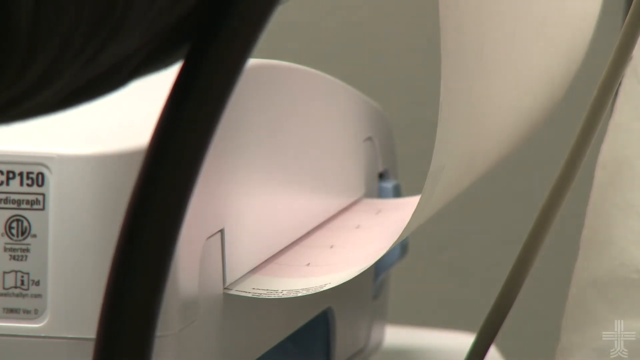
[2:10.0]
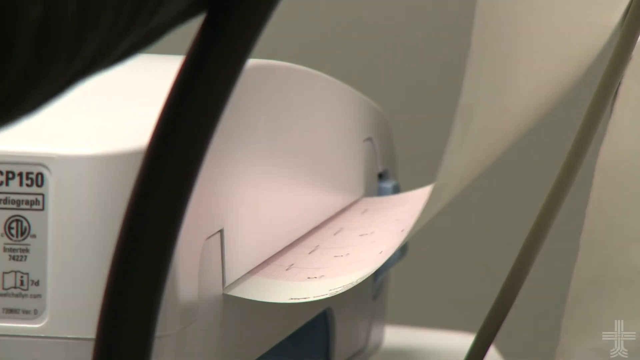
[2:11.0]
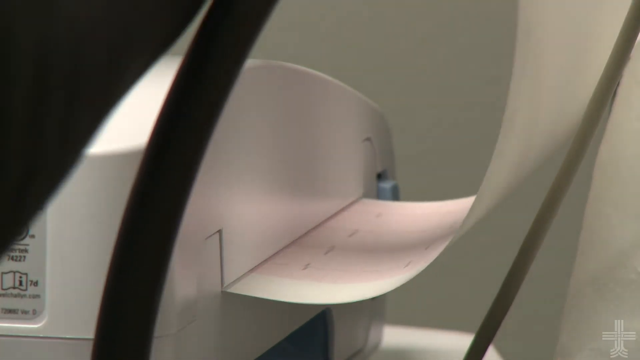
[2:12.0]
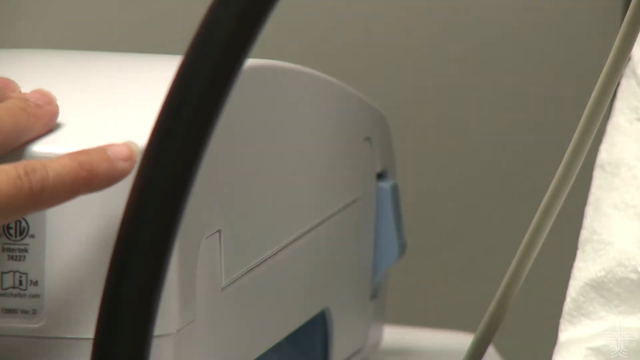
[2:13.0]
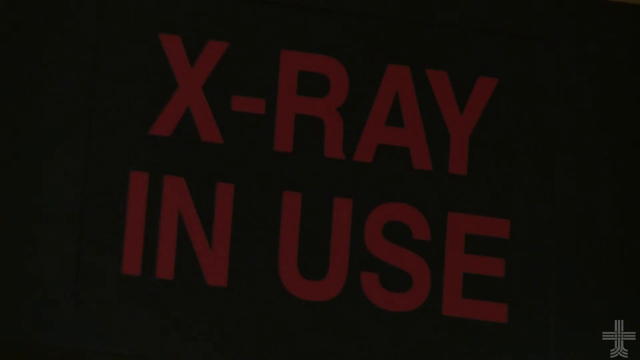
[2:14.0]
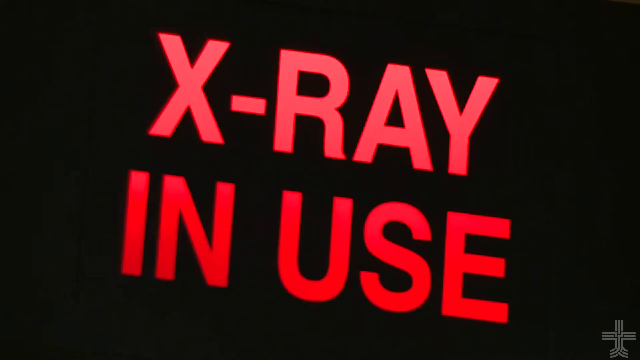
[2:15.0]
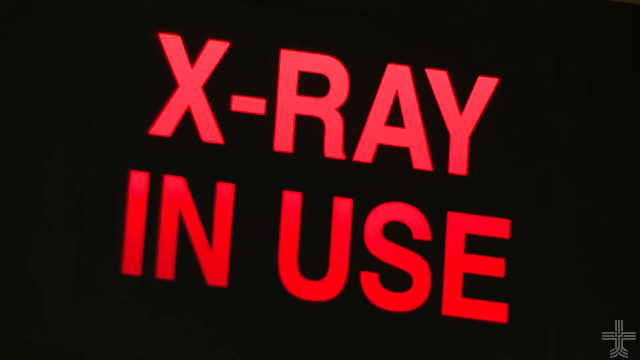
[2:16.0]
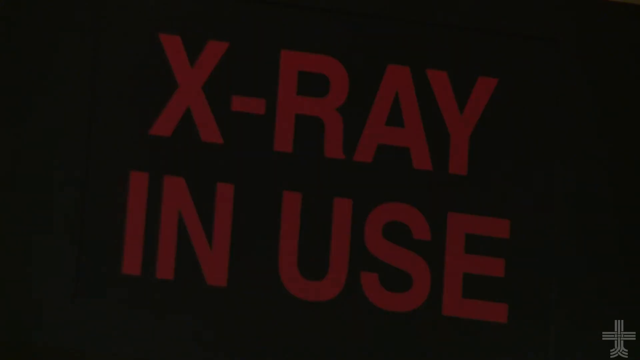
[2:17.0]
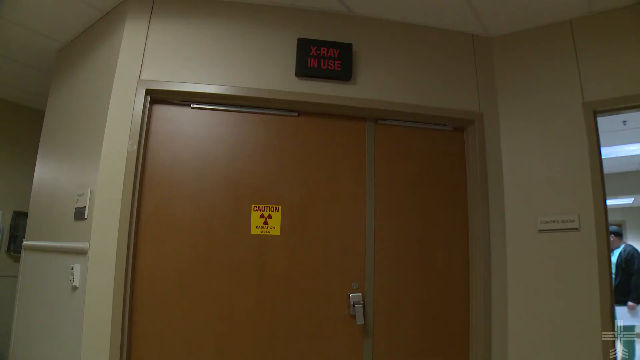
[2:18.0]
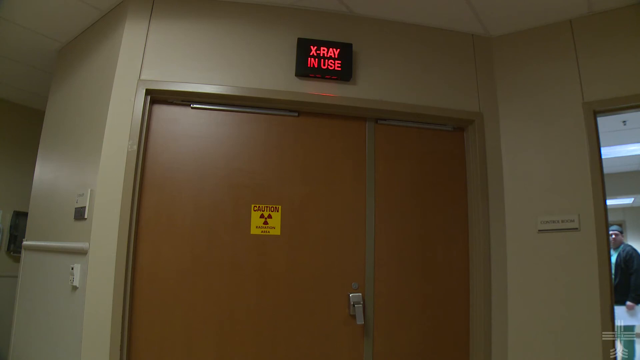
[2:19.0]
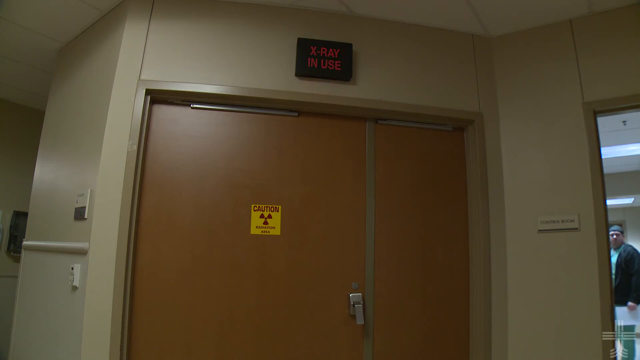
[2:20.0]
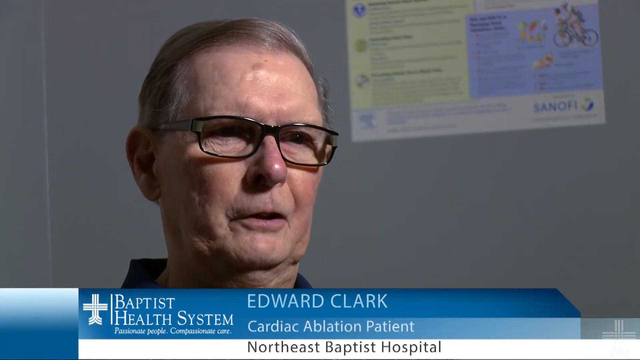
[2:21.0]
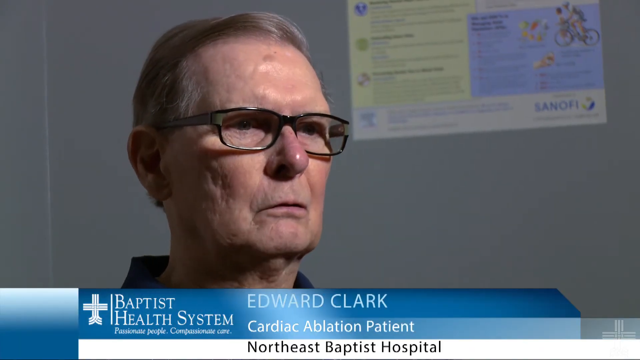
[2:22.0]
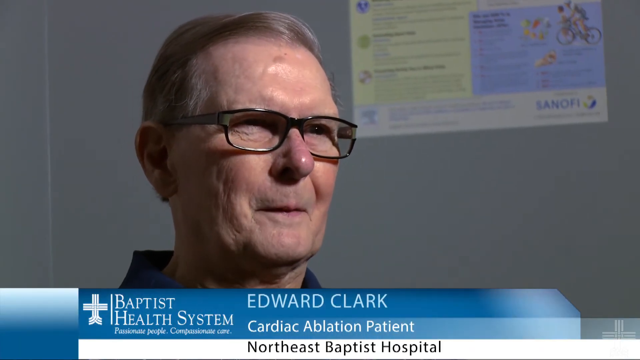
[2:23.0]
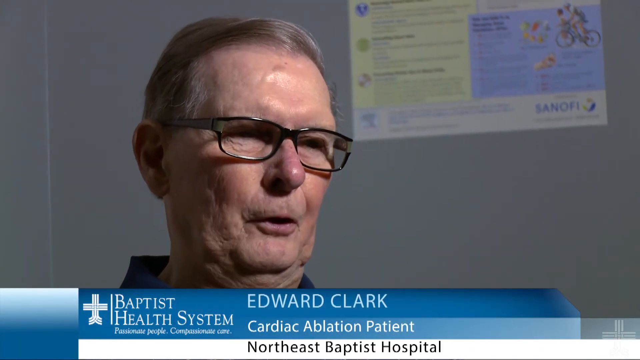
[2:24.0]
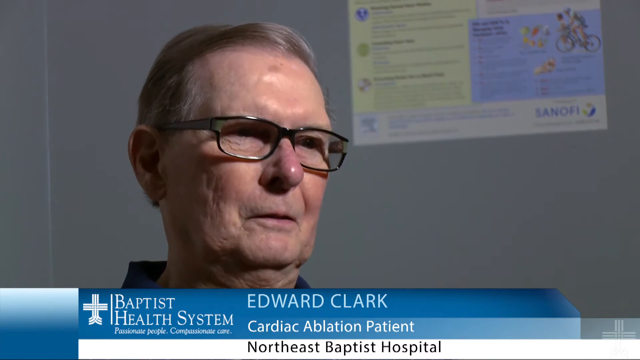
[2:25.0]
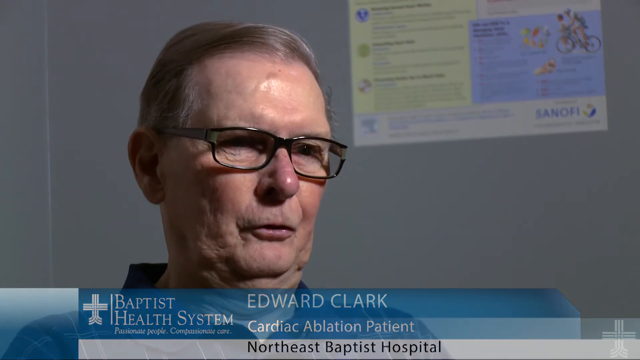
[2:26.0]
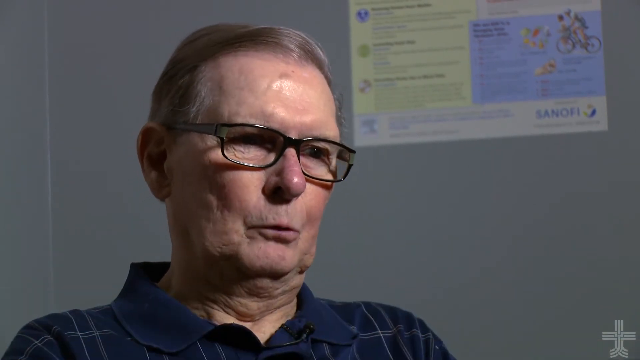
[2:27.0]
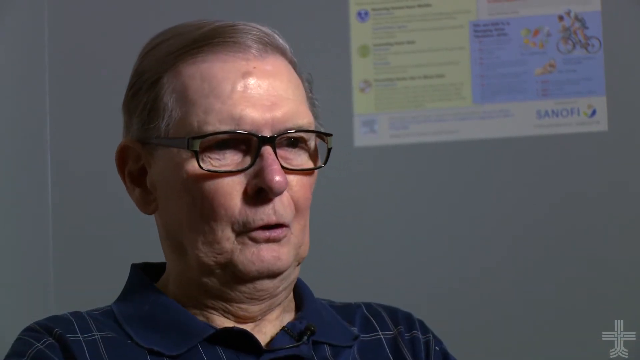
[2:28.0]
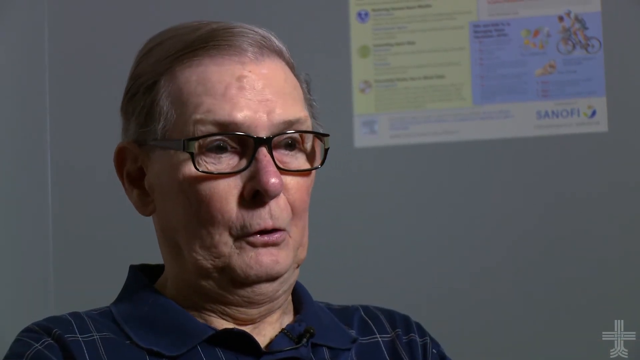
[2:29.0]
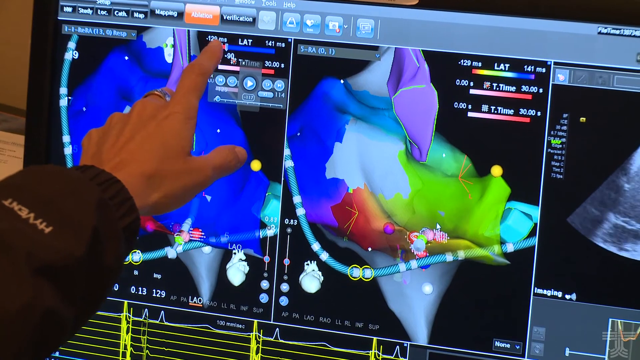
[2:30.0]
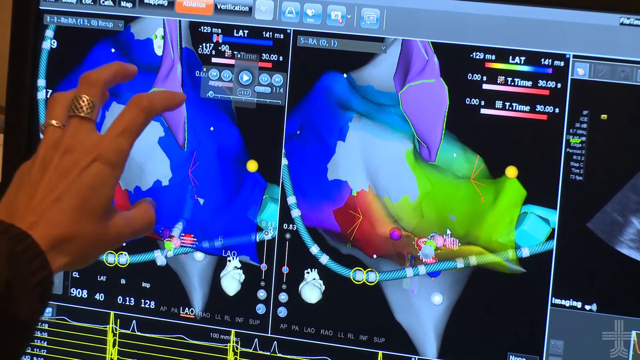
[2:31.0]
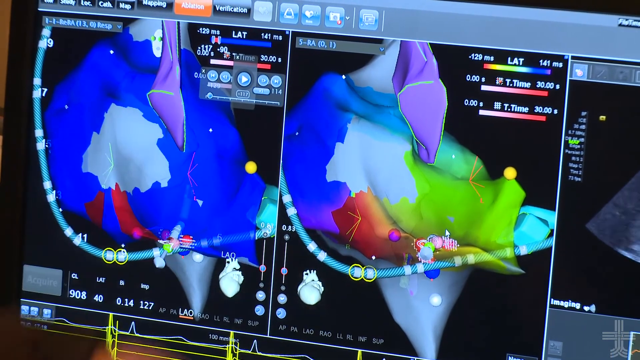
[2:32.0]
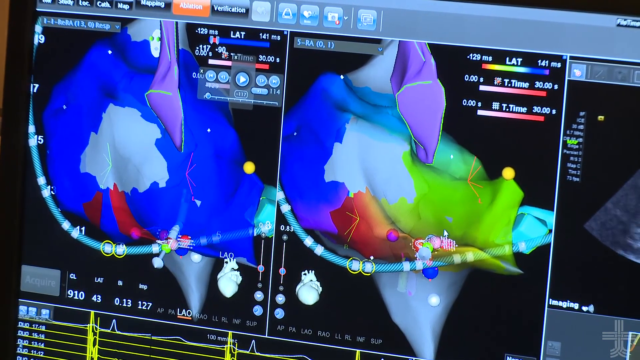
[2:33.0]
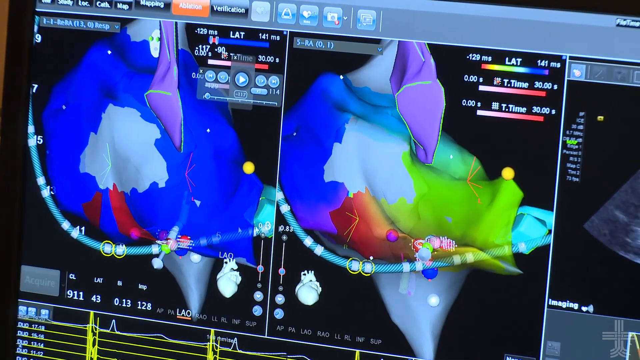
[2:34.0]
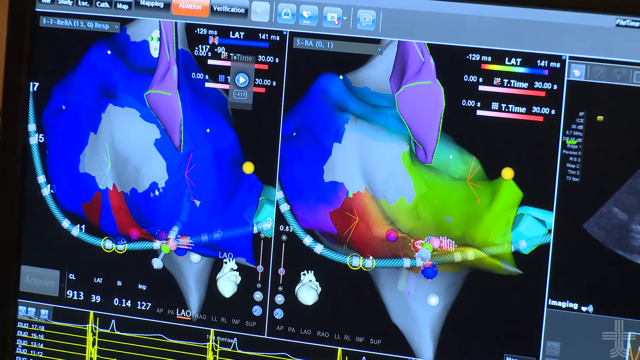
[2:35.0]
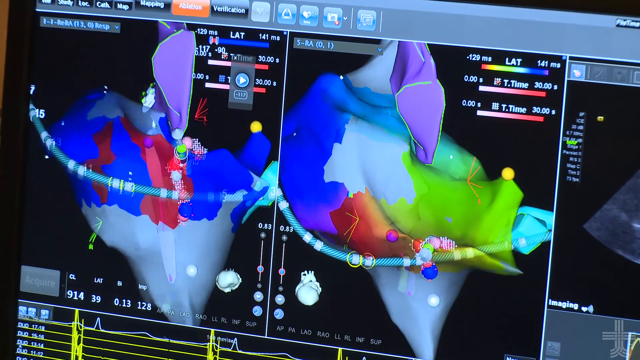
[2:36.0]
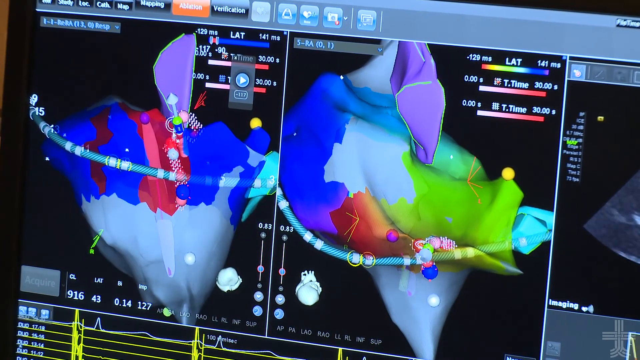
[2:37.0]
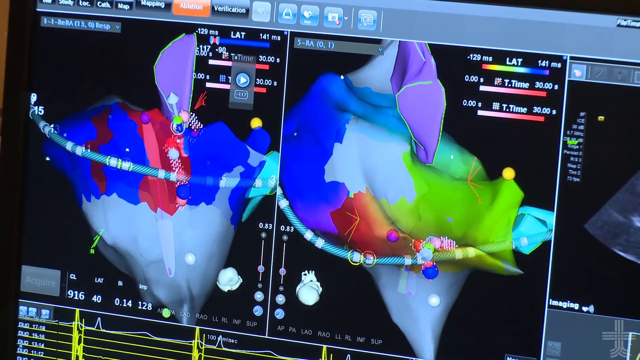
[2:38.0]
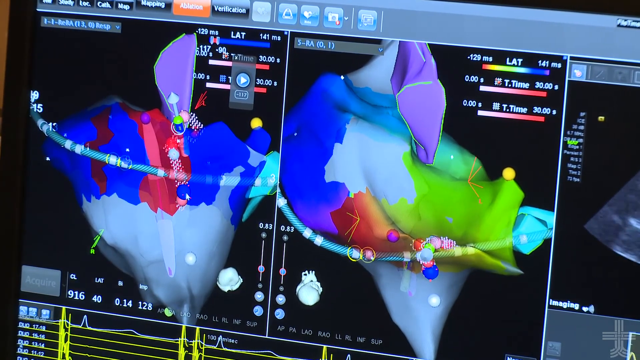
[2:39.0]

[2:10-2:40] A printer prints a long piece of paper that looks like it has an electrocardiogram on it, with the pattern of heartbeats visible. The camera shifts to an "x-ray in use" sign in red font on a black background, blinking on and off above a brown door that has a "caution radiation ahead" sticker on it. To the right of the door is a window, and a medical professional stands inside facing the window. The video then switches to an interview with a patient named Edward Clark, a cardiac ablation patient; he is the same patient who was on the table earlier. He wears dark glasses, has gray hair, wears what looks like a dark shirt, and sits in a medical room with some posters about procedures on the wall behind him. Then what appears to be a medical professional explains the procedure, possibly to the patient, using a 3D visualization, possibly of a heart, with what looks like the electrode. The person points to part of the visualization and rotates it to show different parts.